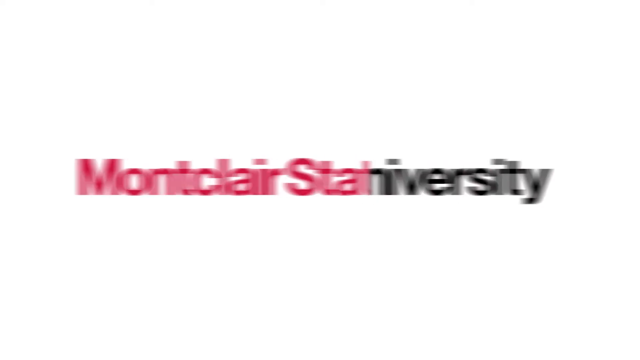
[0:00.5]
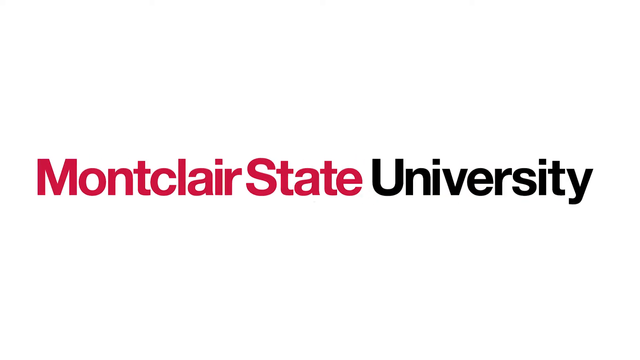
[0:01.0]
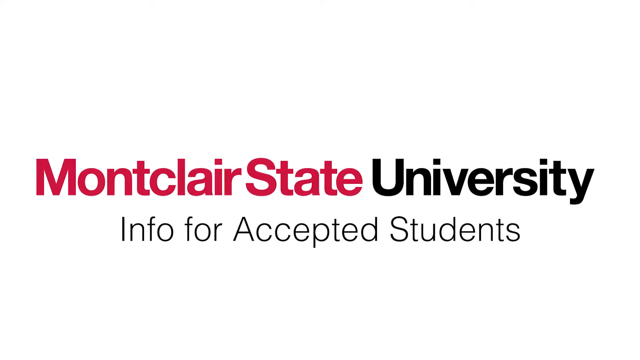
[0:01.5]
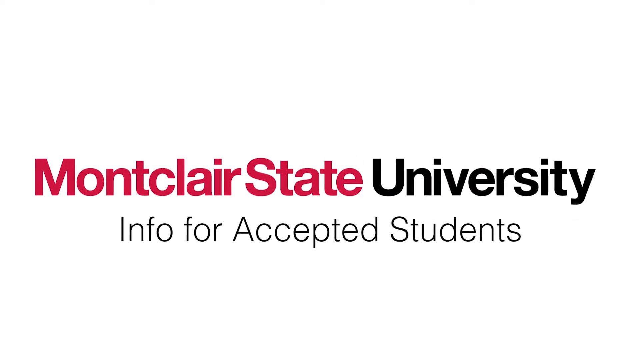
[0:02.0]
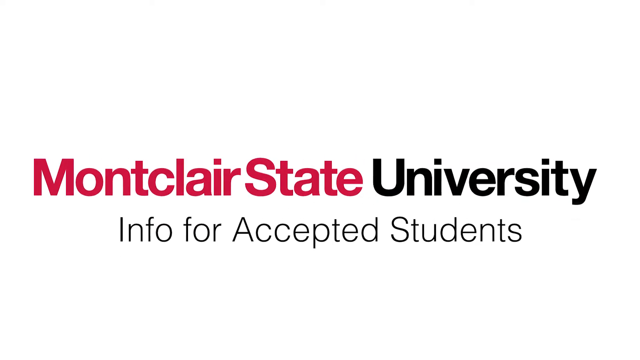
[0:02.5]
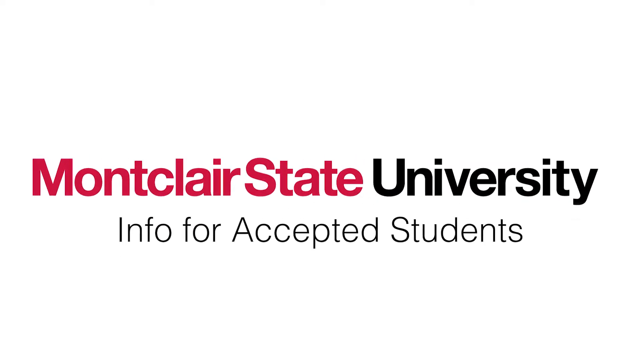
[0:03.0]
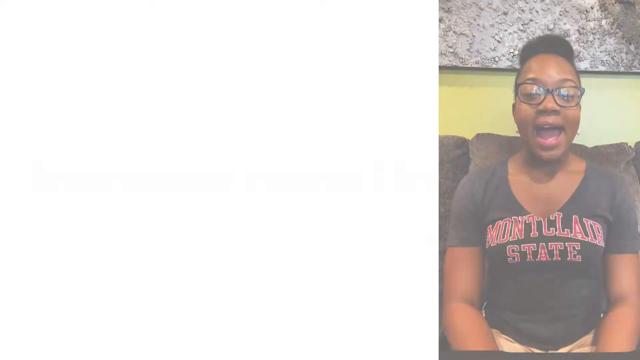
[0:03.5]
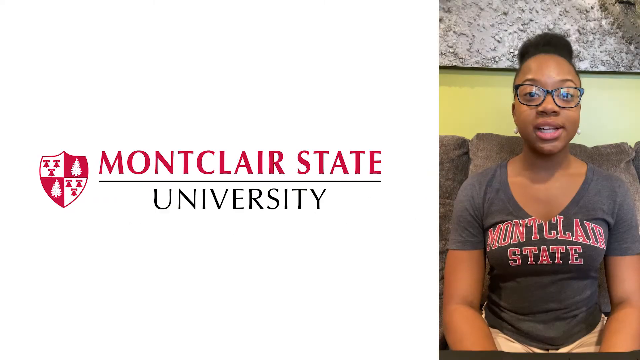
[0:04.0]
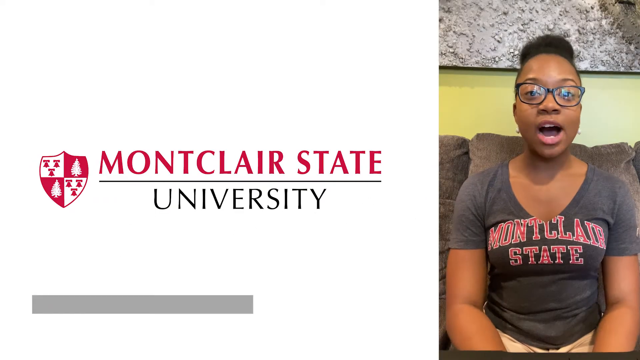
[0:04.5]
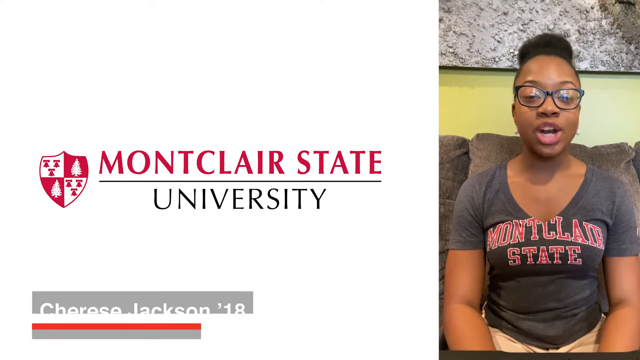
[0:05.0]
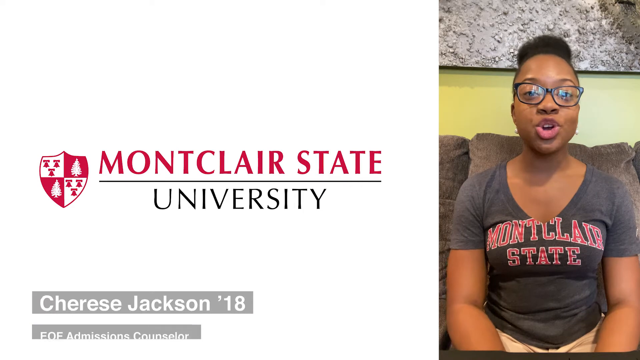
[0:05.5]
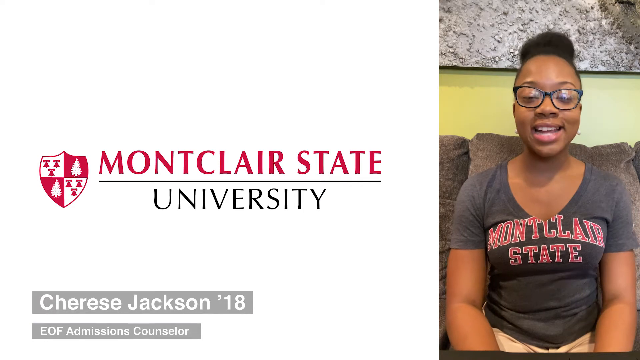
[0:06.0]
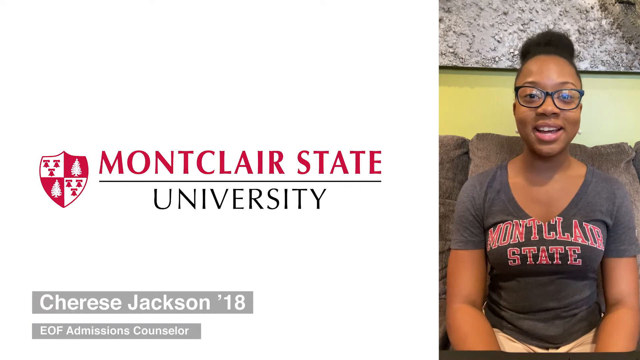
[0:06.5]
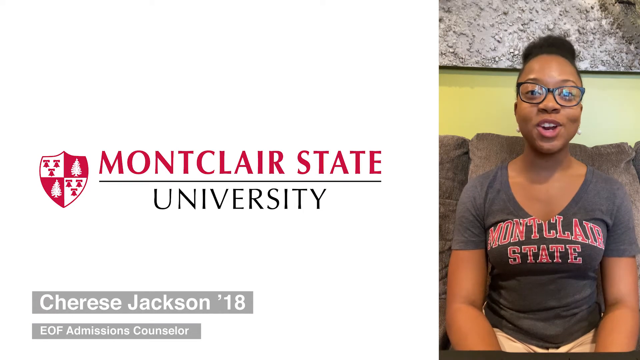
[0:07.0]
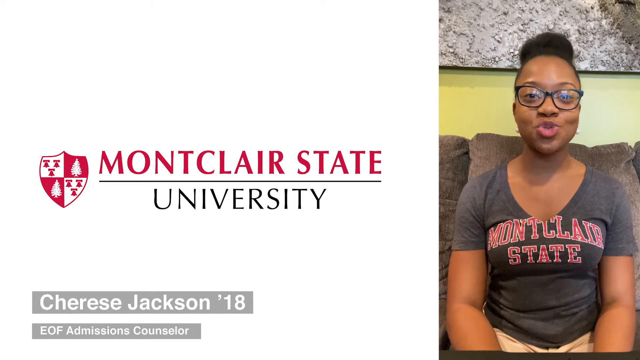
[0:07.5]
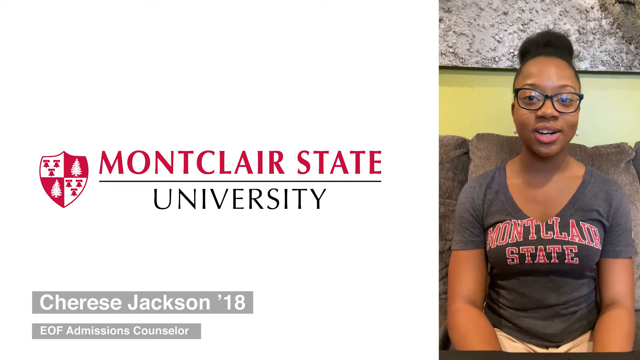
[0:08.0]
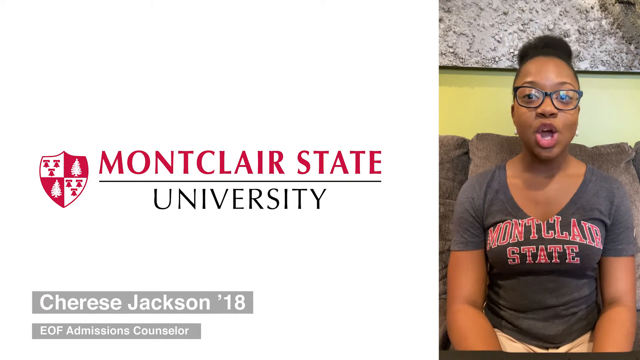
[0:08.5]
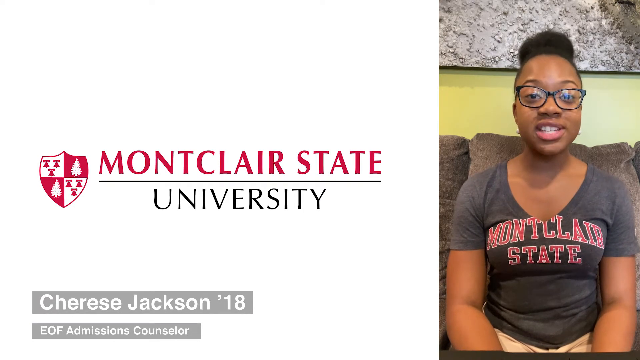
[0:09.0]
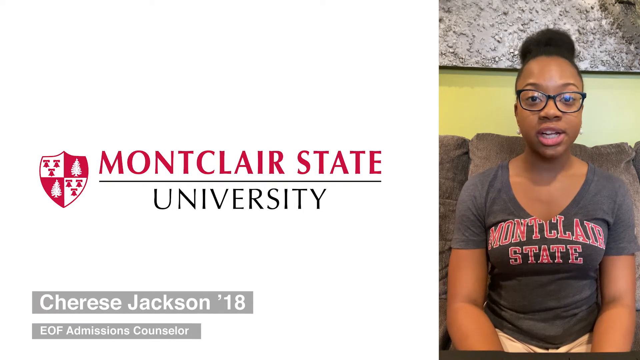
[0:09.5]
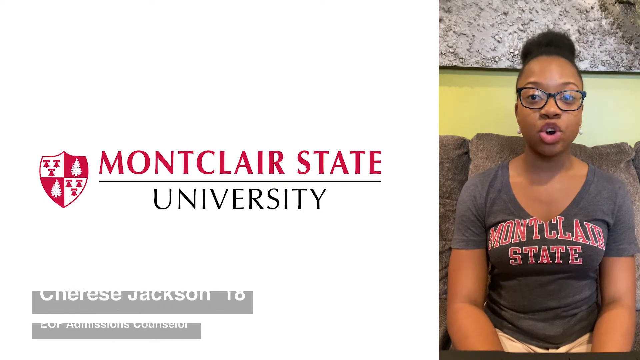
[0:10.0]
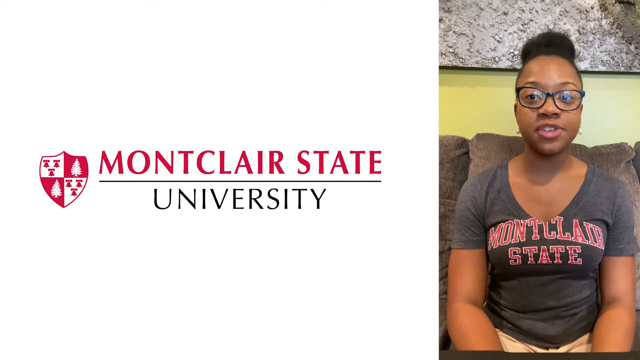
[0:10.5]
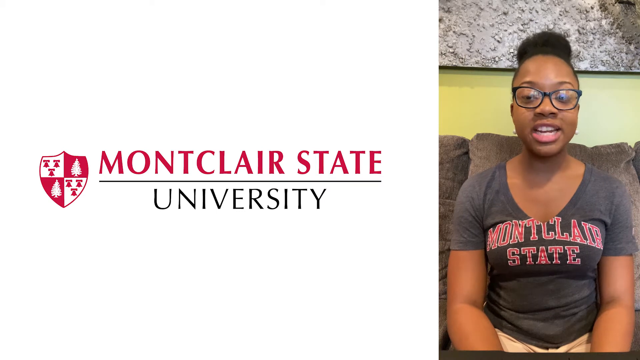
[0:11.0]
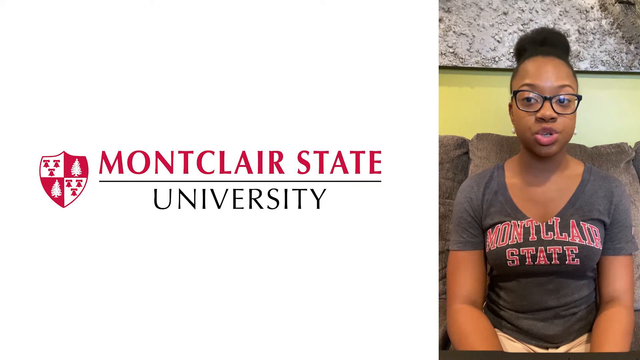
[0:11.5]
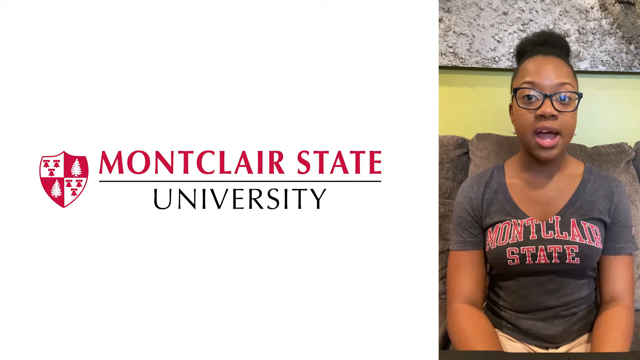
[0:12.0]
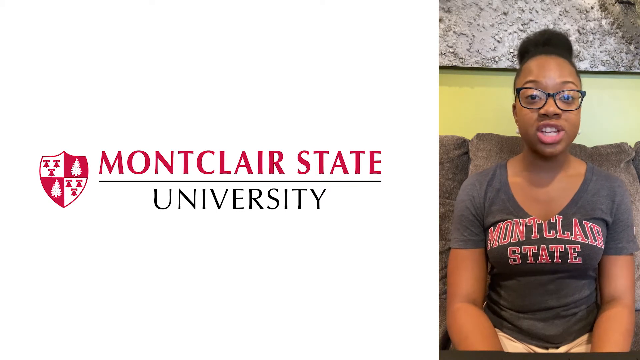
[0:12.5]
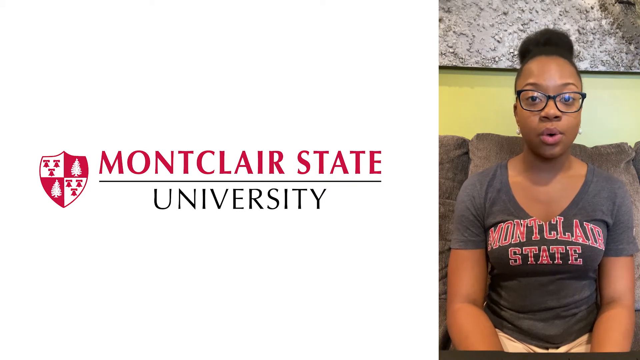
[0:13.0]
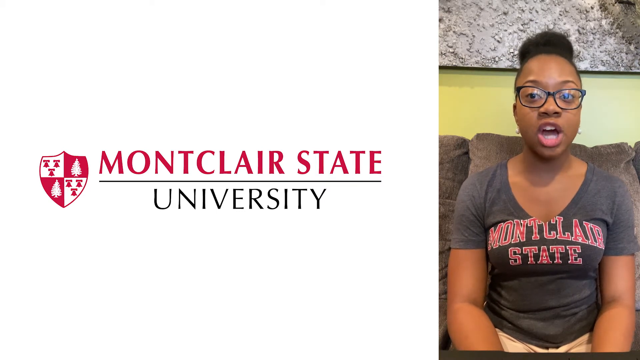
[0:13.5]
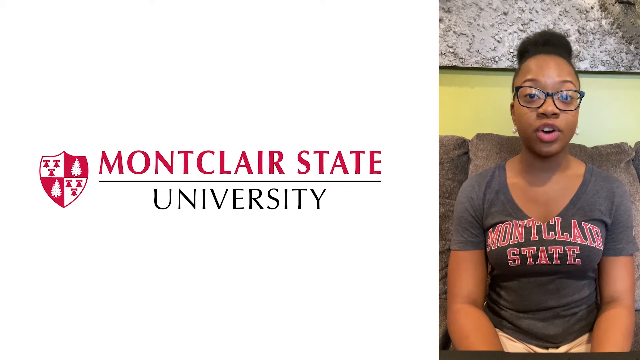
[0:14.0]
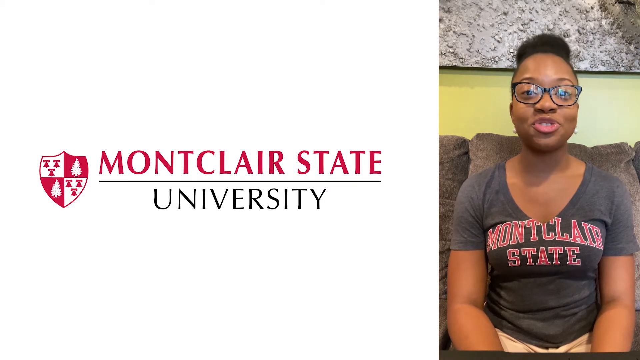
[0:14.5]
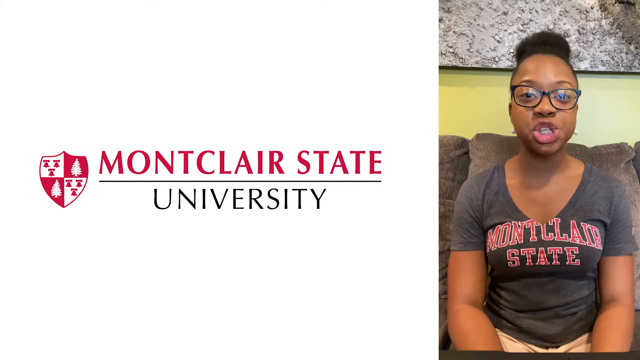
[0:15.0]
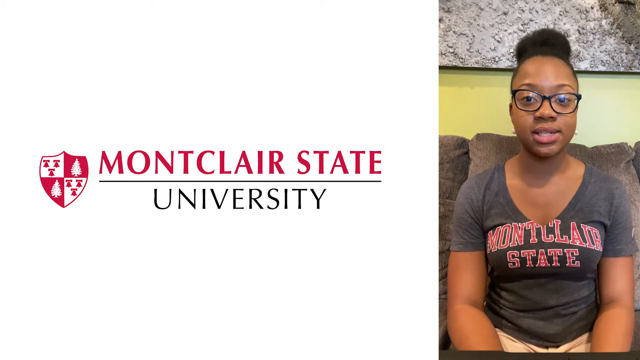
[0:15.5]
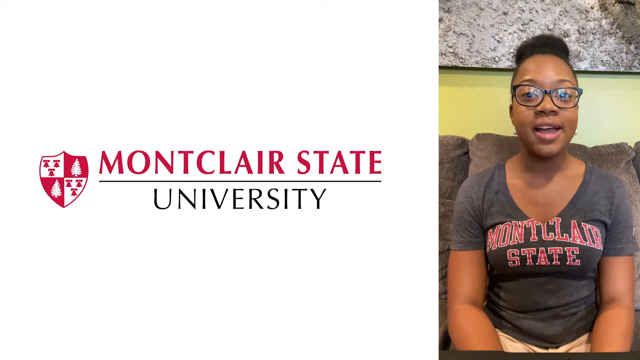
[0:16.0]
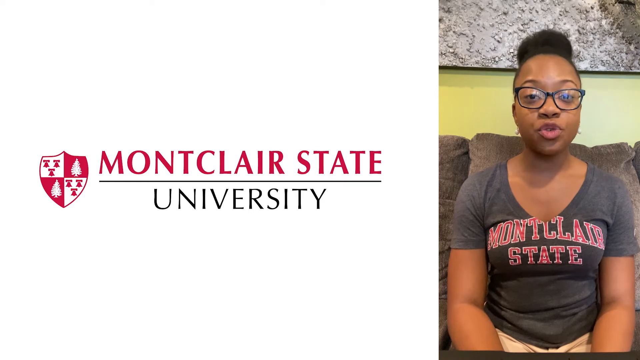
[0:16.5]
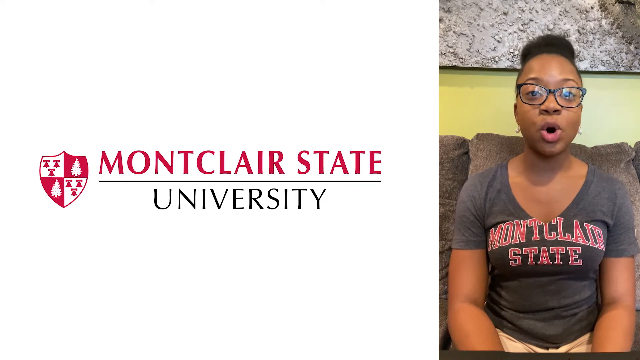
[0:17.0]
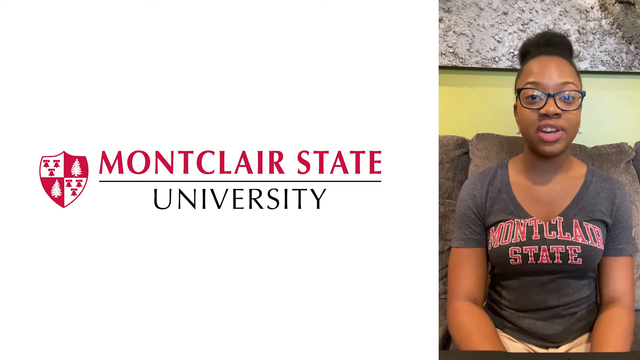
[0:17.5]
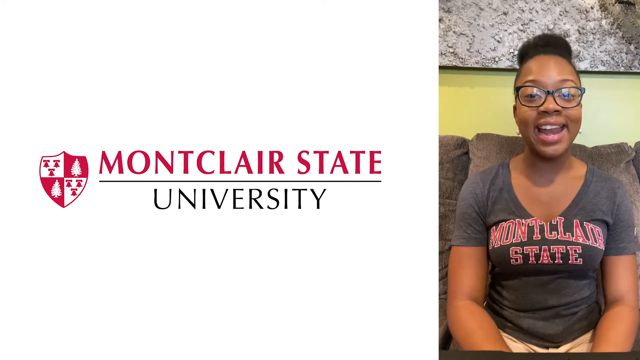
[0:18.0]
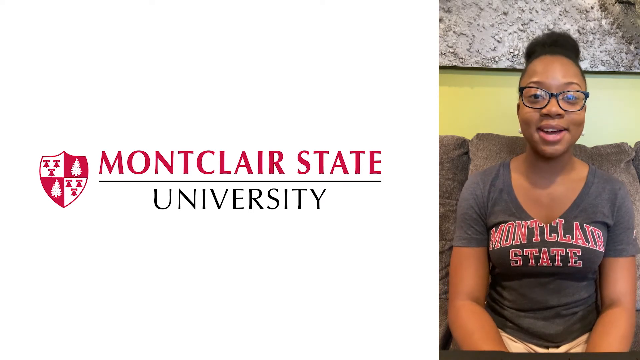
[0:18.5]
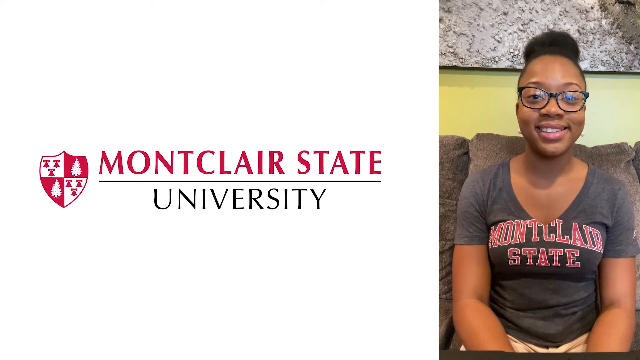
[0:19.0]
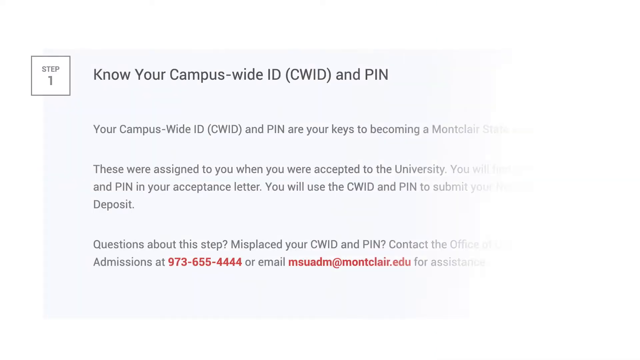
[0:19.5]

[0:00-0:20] The video opens with the Montclair State University logo, followed by the title "Info for Accepted Students." A young woman wearing glasses and a Montclair State T-shirt appears, sitting on a couch, and seems friendly and welcoming. Text on screen introduces her as Cherise Jackson, an Admissions Counsellor. The video then shows the first step in the enrolment process: a slide labelled "Step 1" explains that students need to know their campus-wide ID and PIN, which are found in the acceptance letter and are needed for submitting a deposit. The visuals are clean, with helpful text.